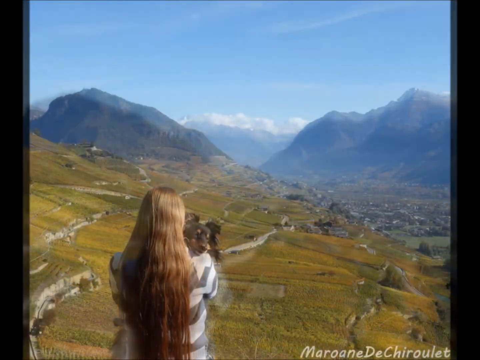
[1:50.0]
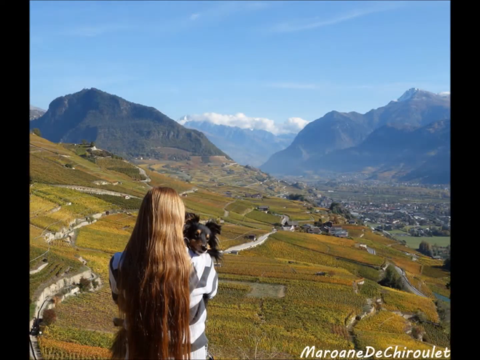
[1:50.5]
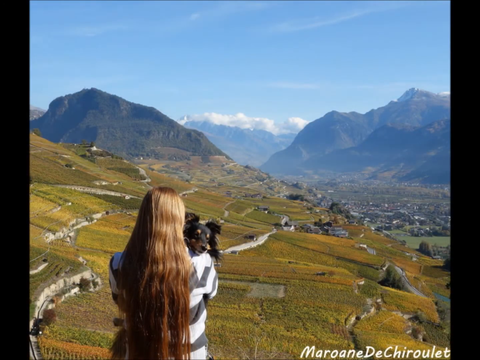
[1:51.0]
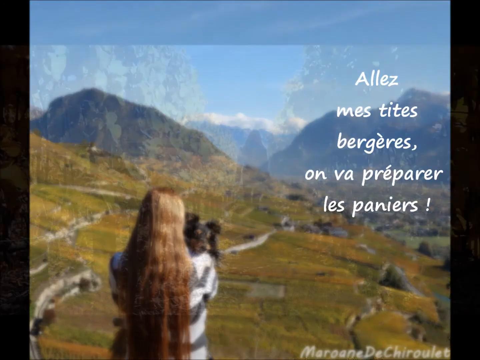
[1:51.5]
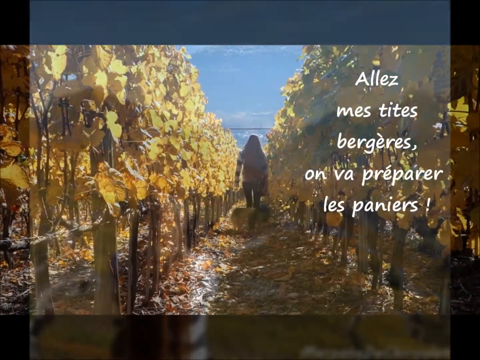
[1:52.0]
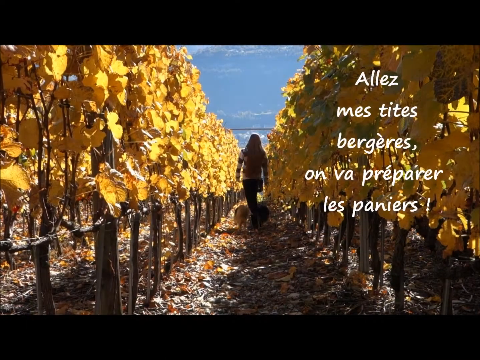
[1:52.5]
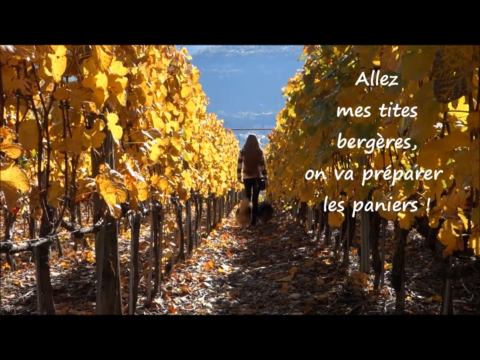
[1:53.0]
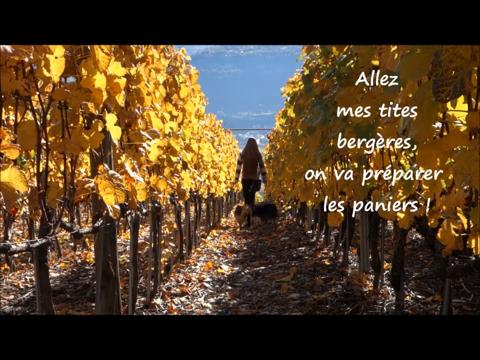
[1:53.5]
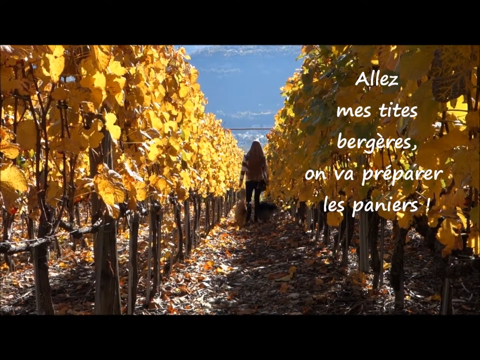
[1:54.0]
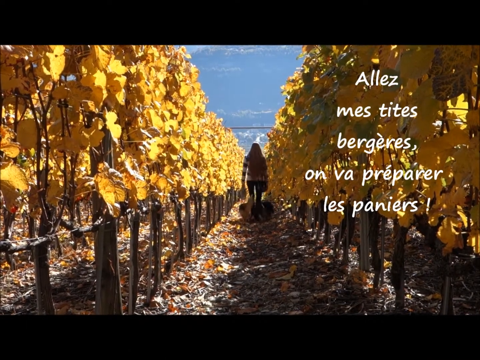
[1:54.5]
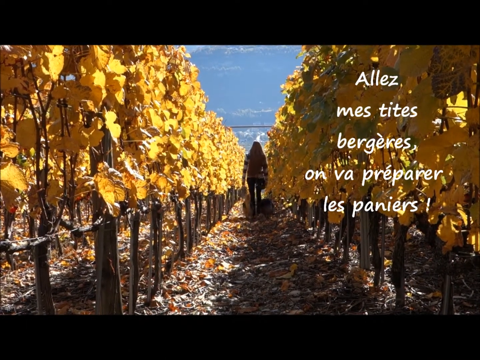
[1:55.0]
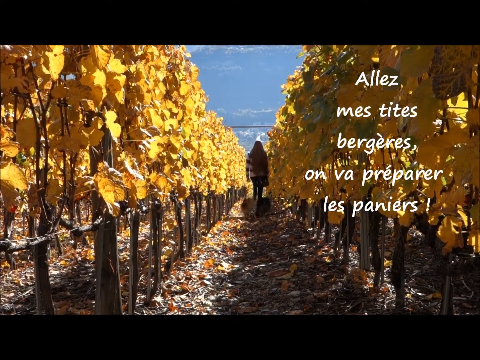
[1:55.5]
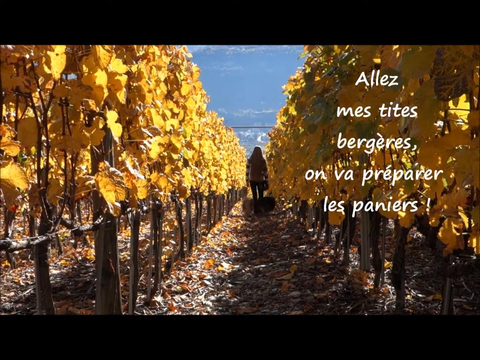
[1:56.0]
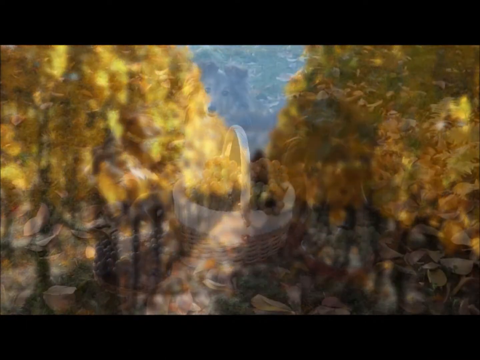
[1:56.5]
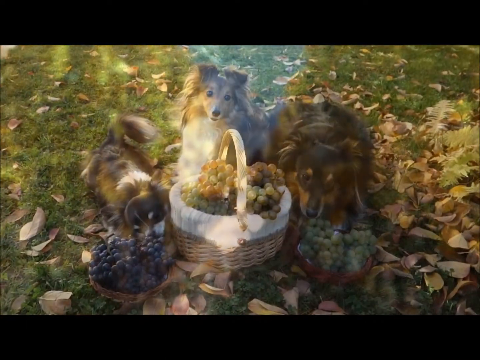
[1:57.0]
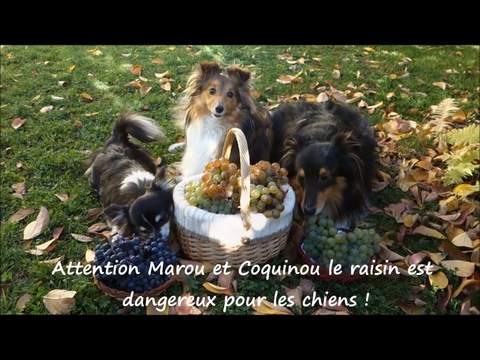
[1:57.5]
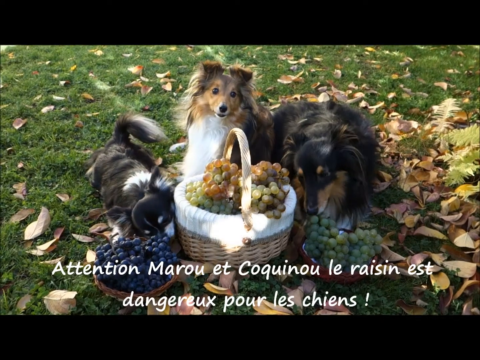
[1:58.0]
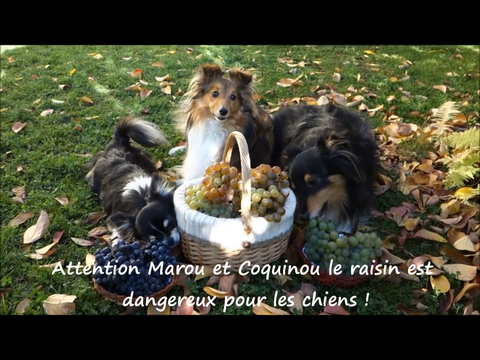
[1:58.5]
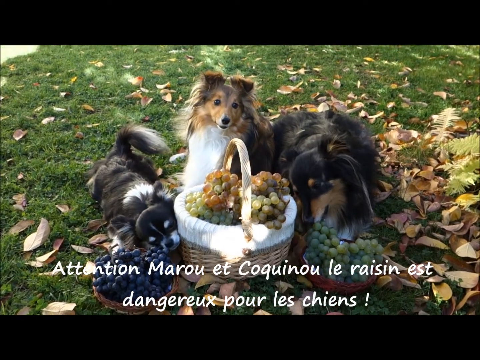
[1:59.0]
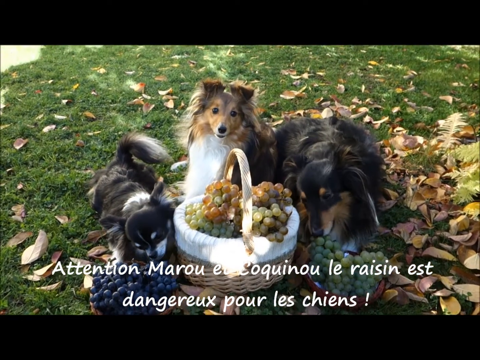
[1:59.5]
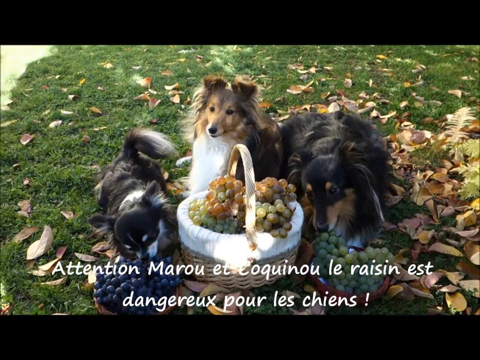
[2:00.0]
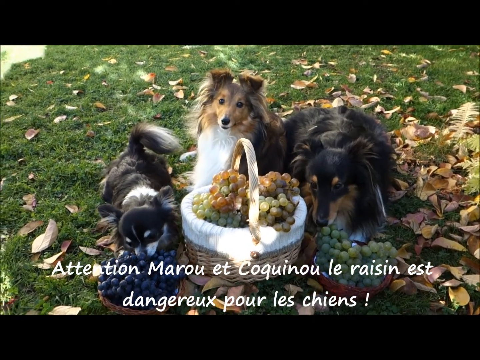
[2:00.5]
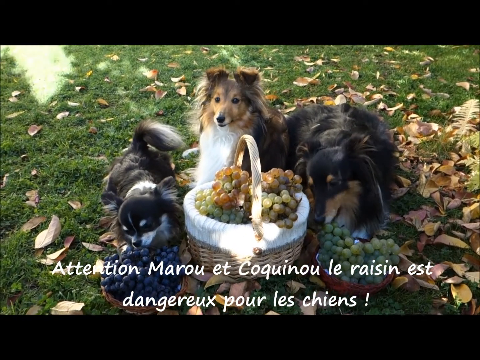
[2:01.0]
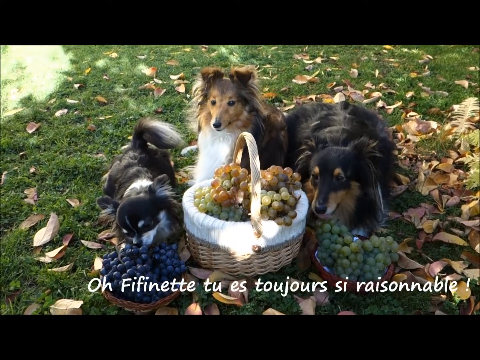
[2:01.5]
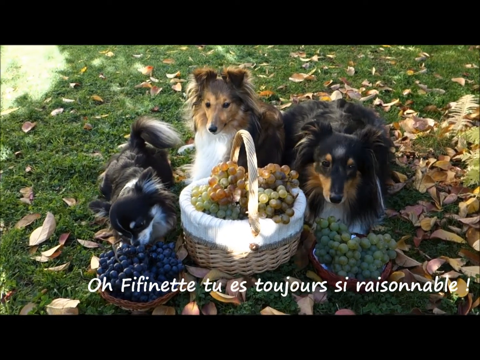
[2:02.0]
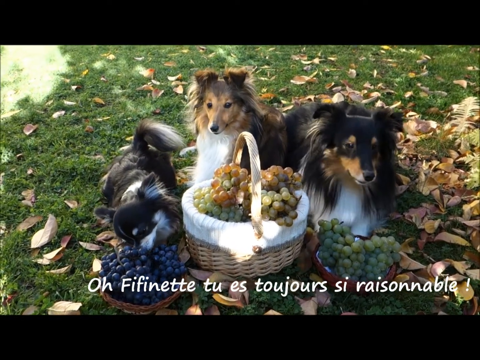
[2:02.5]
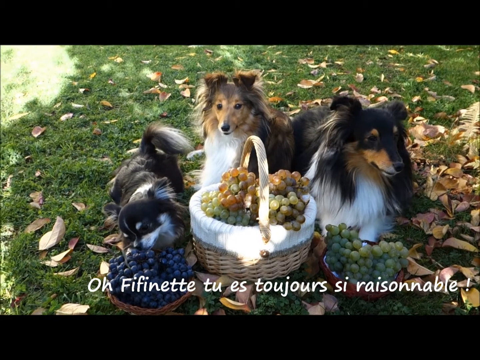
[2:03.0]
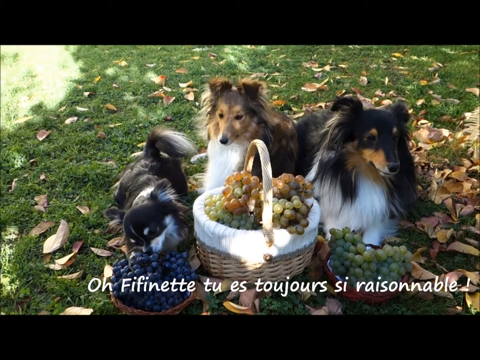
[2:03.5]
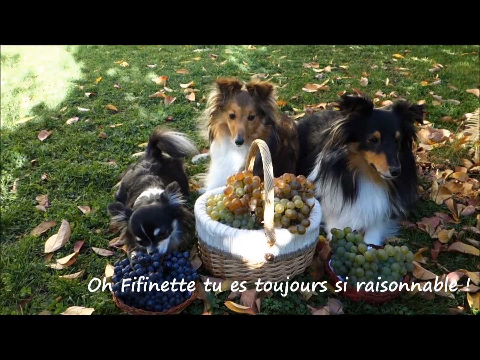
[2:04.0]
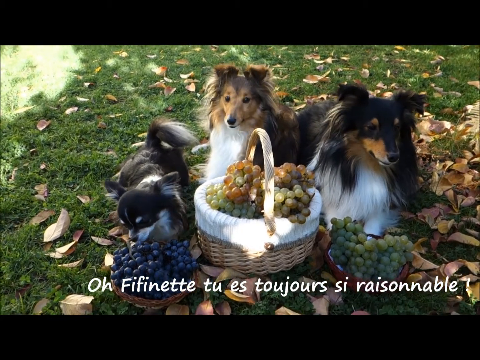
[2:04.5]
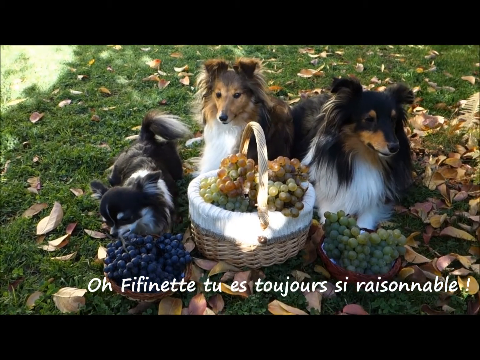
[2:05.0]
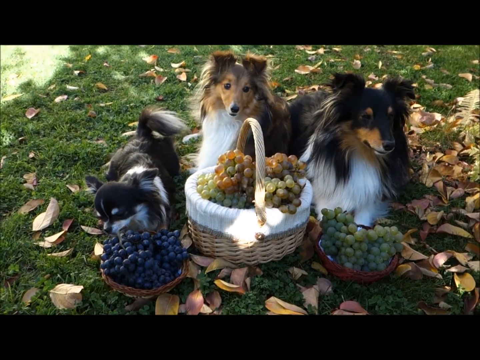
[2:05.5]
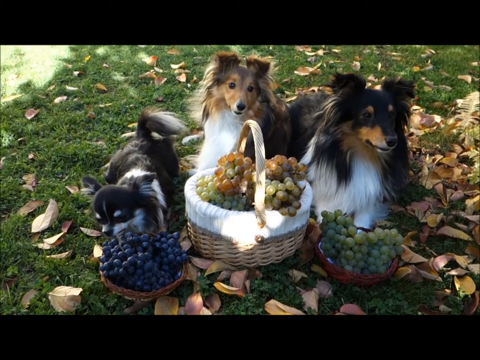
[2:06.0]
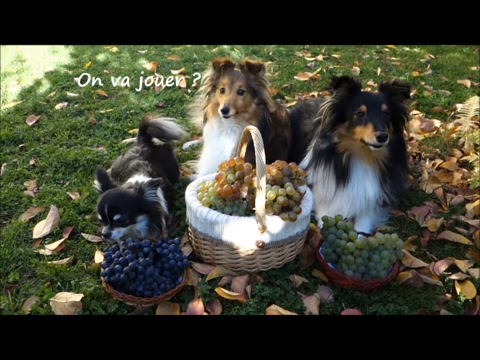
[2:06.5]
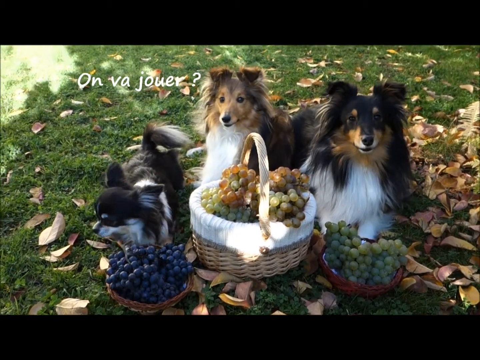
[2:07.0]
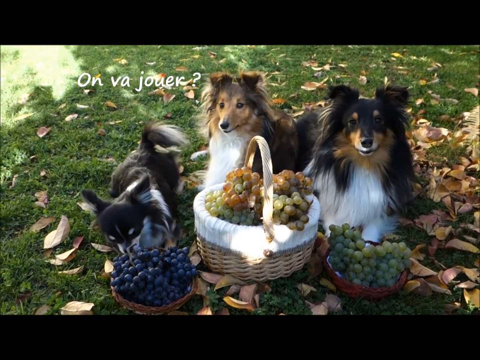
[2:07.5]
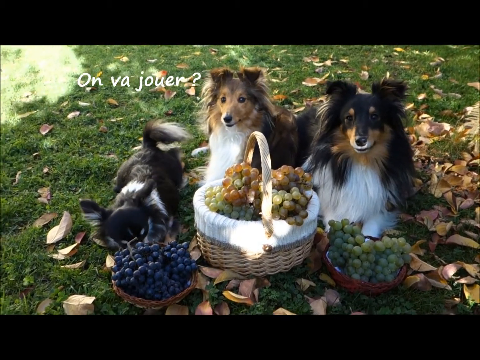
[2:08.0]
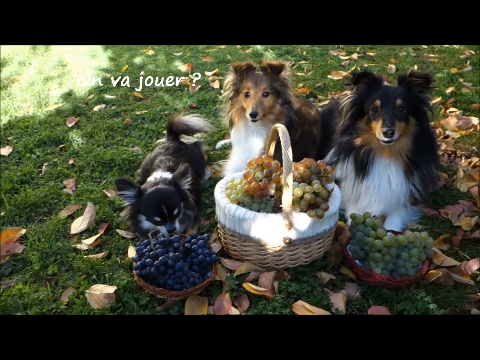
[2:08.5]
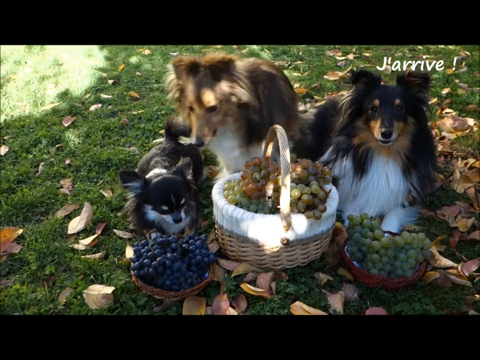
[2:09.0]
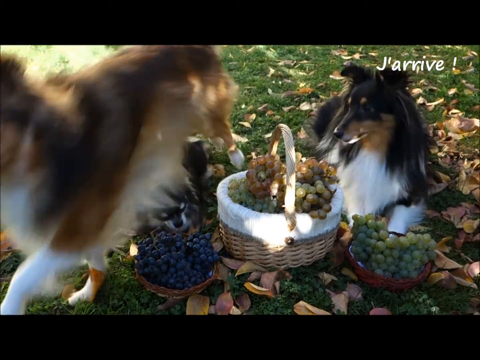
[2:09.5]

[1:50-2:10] Another picture shows the woman, with light reddish and blondish hair, holding the dark-colored dog and kind of looking over the scenery. The pictures keep changing. More French text appears, and someone walks down the middle of the vineyard with one of the dogs. The dogs sit in some grass next to a wicker basket of grapes with white on top; they sniff the grapes and look at the camera but do not eat anything. Besides the two collies there is a dark-colored chihuahua.